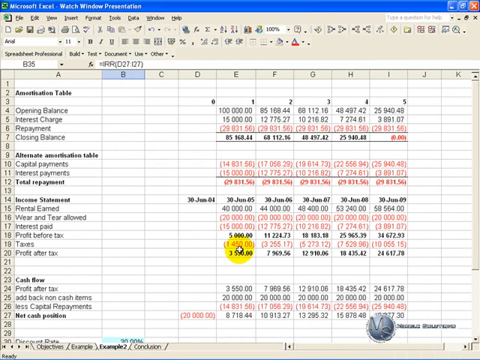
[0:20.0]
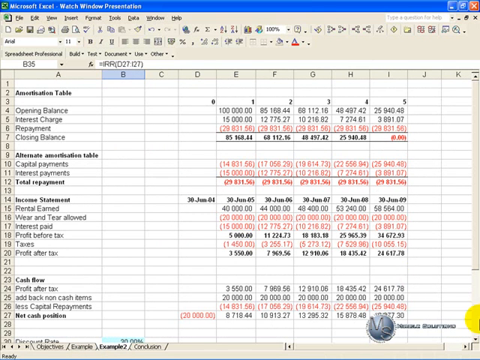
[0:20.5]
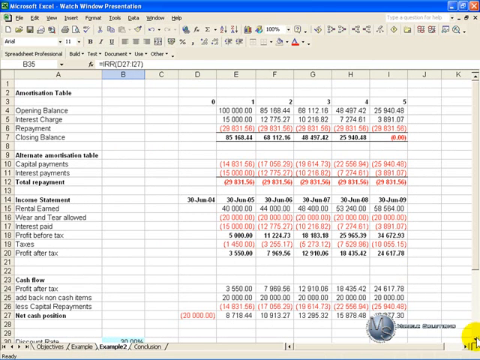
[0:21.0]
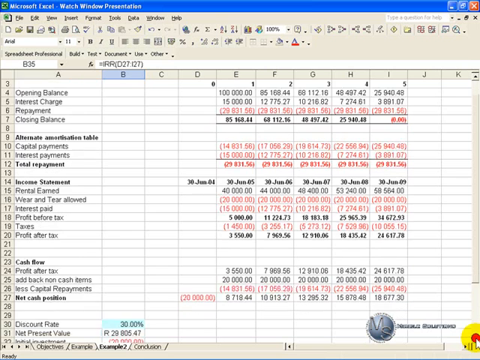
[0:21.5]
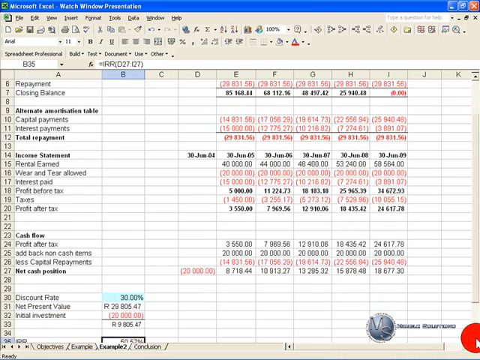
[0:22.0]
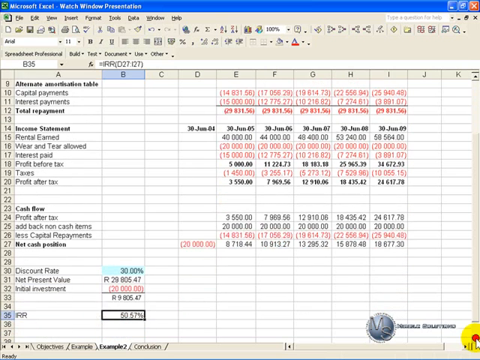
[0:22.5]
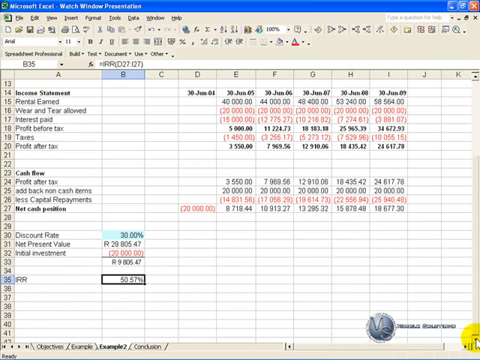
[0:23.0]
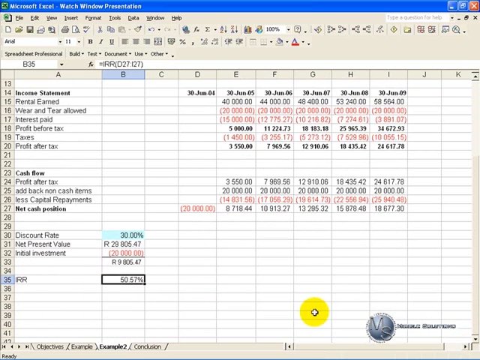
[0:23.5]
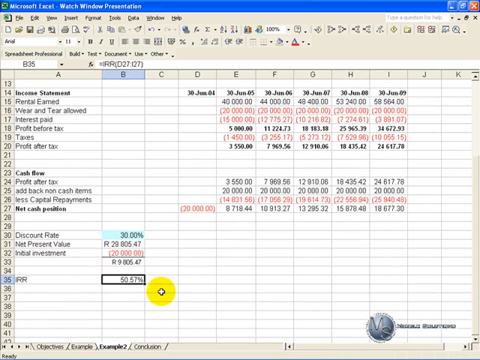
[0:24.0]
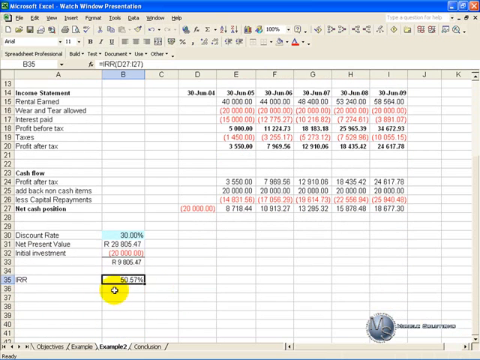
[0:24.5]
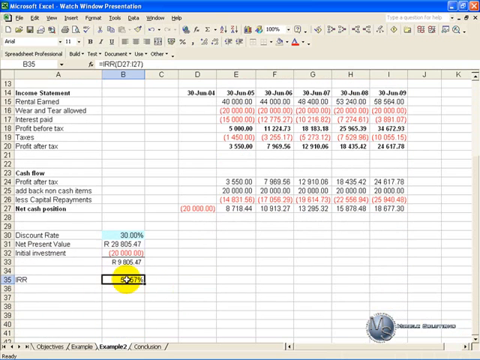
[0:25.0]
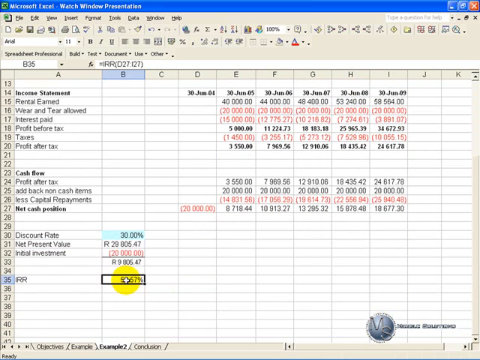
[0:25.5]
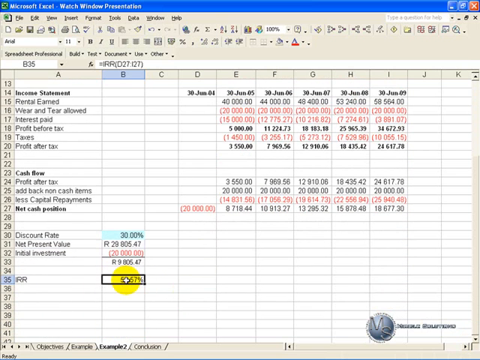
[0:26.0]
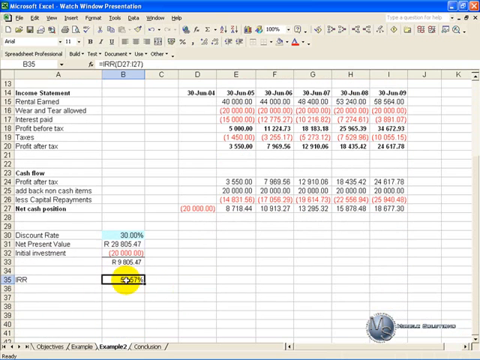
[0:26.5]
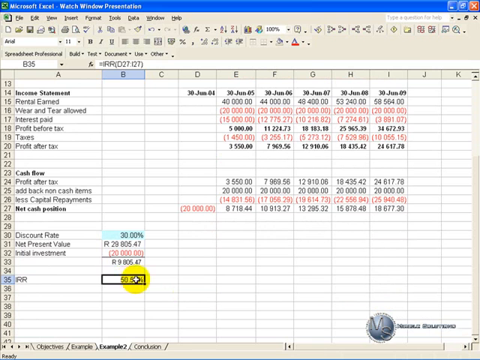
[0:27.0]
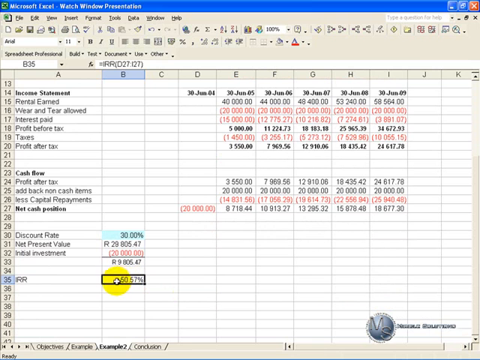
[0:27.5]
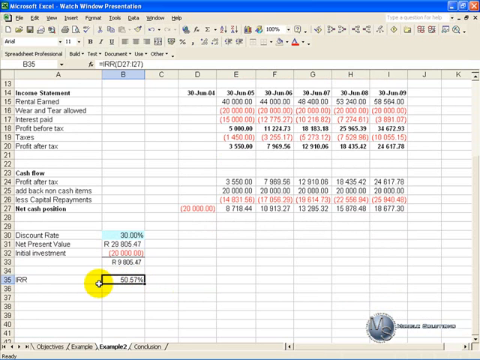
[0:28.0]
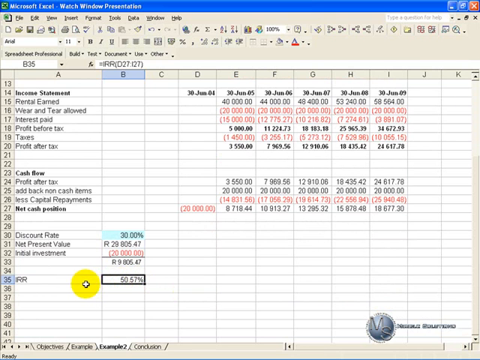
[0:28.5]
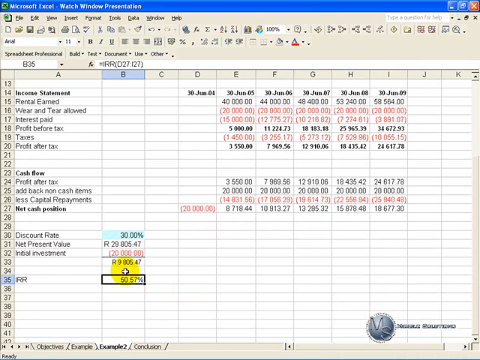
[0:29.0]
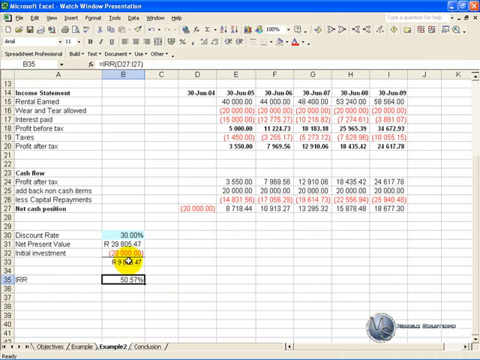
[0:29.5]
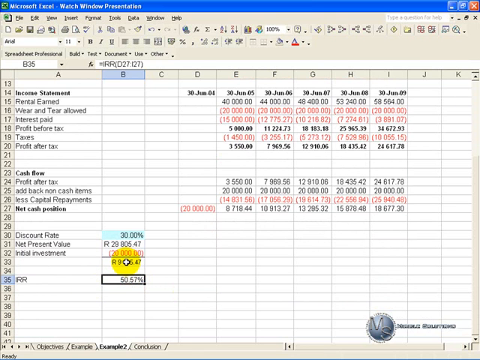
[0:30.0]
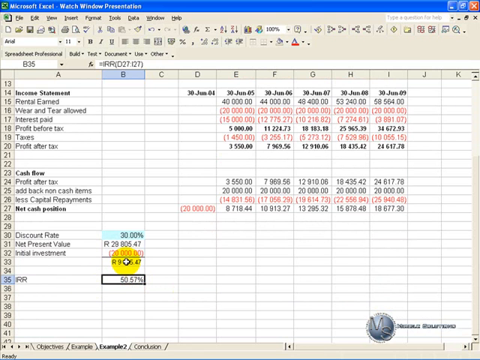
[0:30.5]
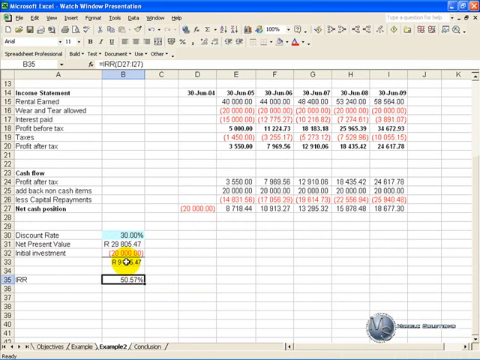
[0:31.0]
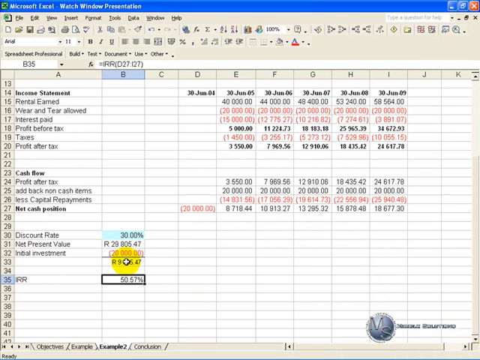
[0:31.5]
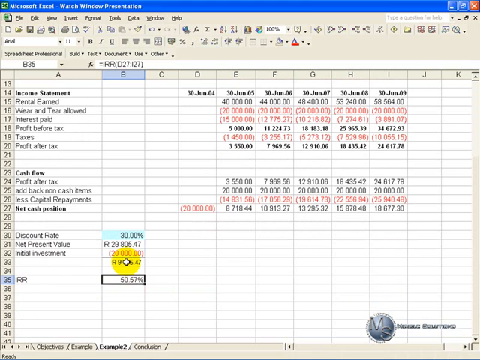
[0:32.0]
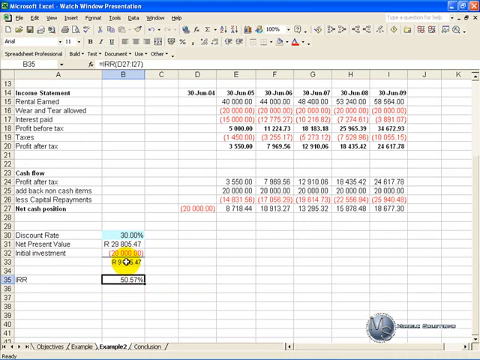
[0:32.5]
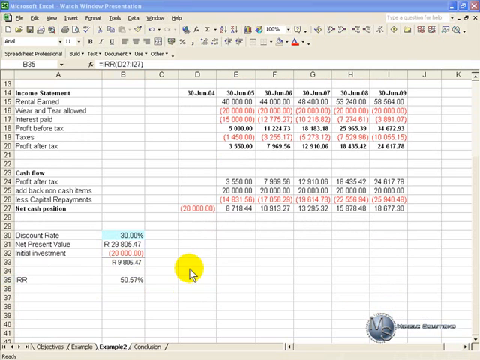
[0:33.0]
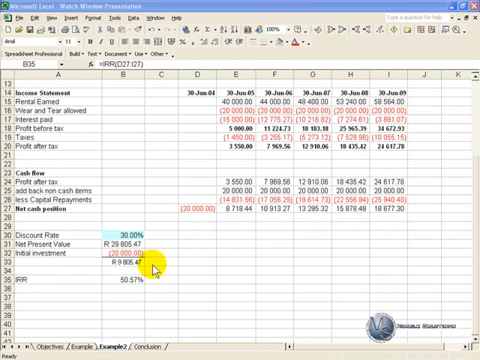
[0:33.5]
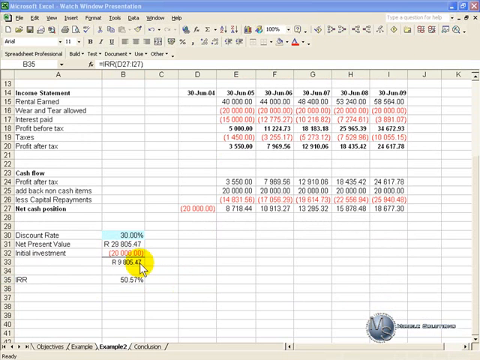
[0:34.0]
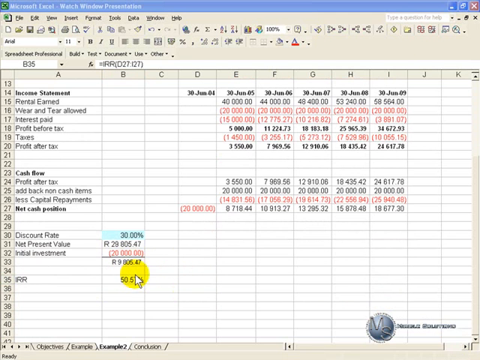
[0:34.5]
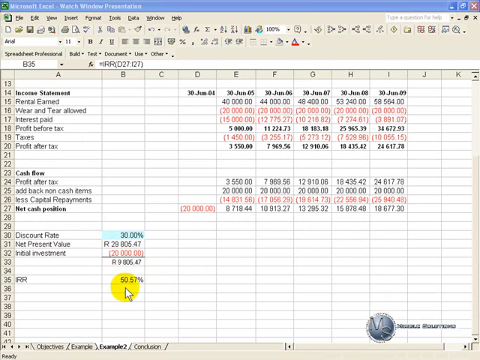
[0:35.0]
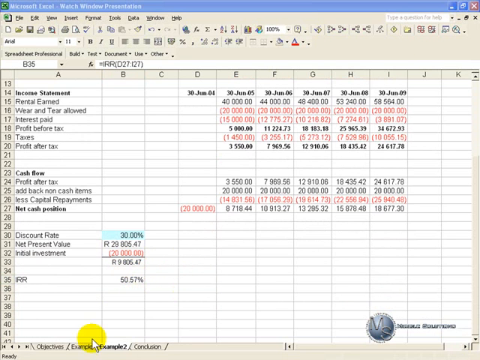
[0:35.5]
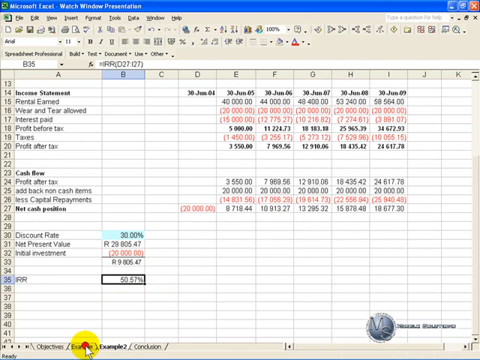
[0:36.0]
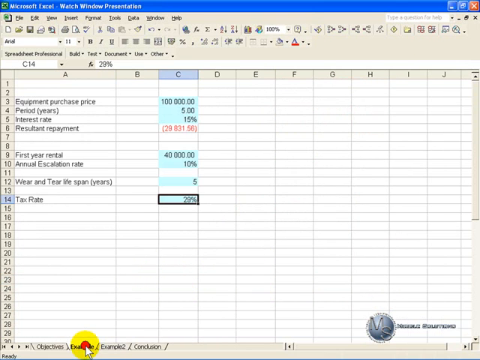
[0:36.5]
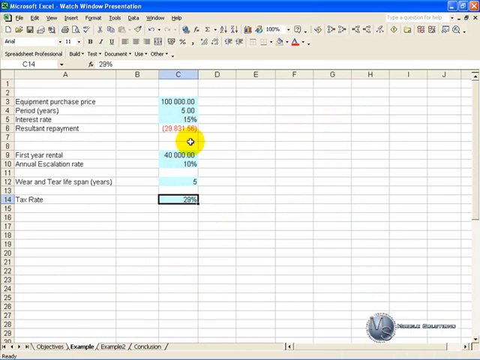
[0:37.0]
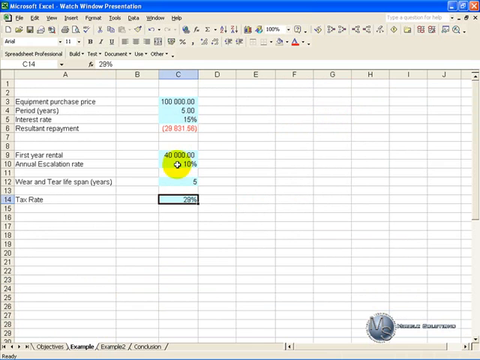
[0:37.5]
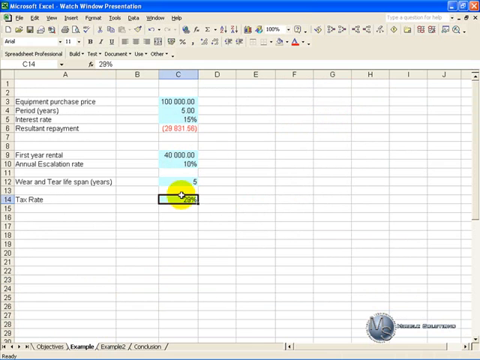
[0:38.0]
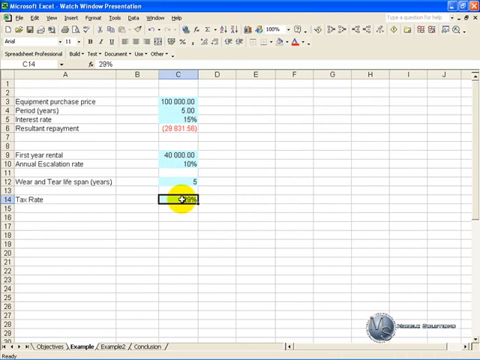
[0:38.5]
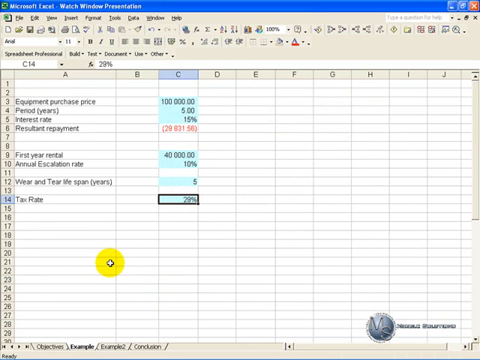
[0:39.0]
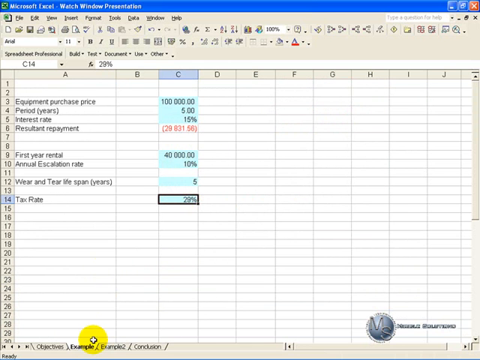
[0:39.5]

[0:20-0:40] A sheet appears with rows 1 through 30 down the y-axis and columns A through K across the x-axis. Column A lists labels including "amortization table," "opening balance," "interest charge," "repayment," "closing balance," "capital payments," "interest payments," "total repayments," "rent earned," "wear and tear allowed," "interest paid," "profit before tax," "taxes" and "profit after tax," along with some other words. Columns E through I, or D through I, hold various numbers, some red and some black, some in parentheses. The screen scrolls down to show rows 30 through 41, with some entries in the B column. The yellow-circled mouse hovers over the B column, clicks on something there, and a page opens showing the earlier view, with blue highlighted numbers in column C and text in column A.